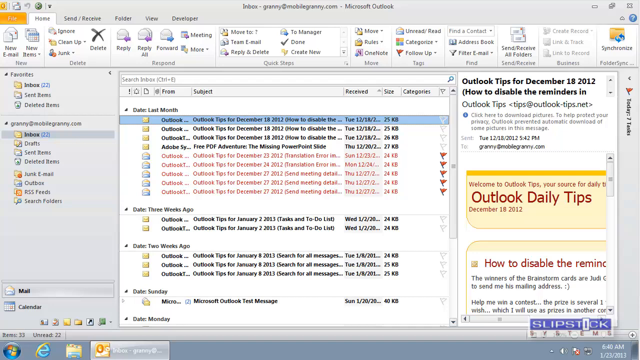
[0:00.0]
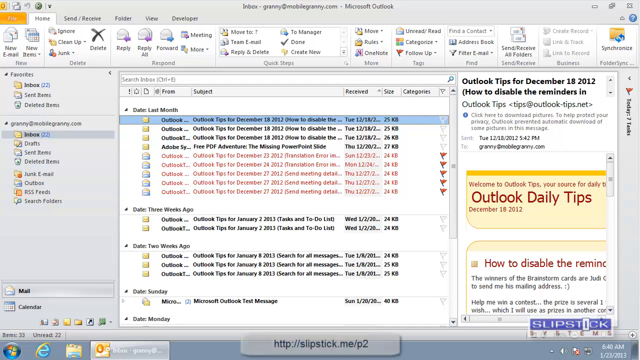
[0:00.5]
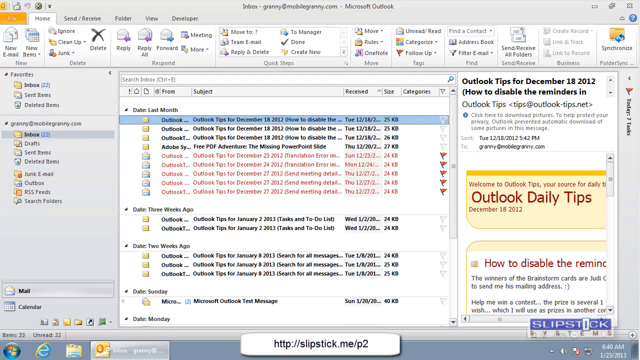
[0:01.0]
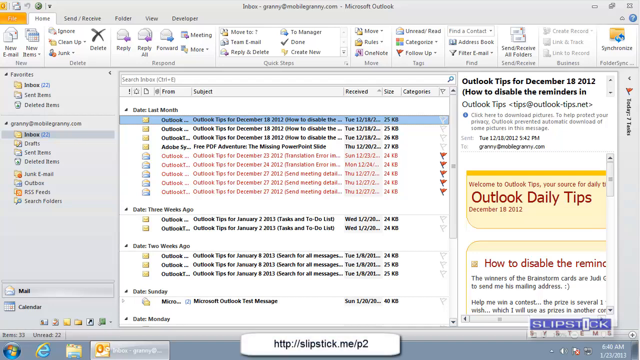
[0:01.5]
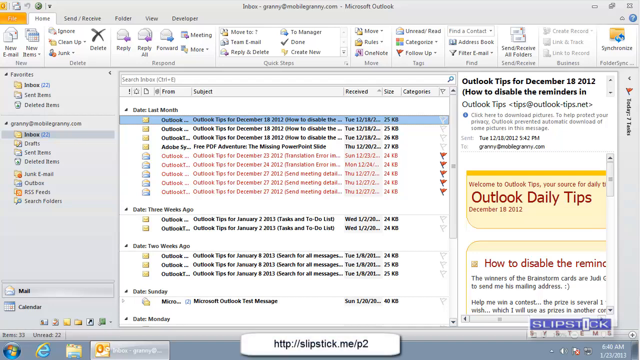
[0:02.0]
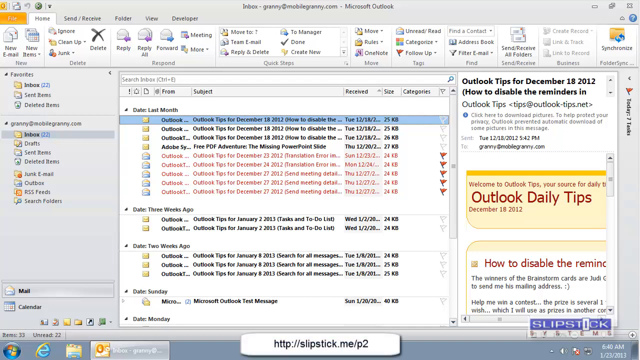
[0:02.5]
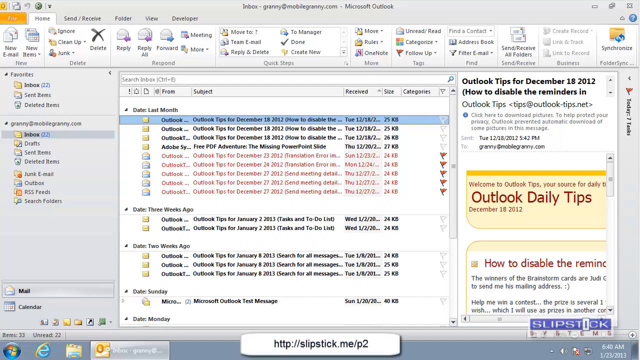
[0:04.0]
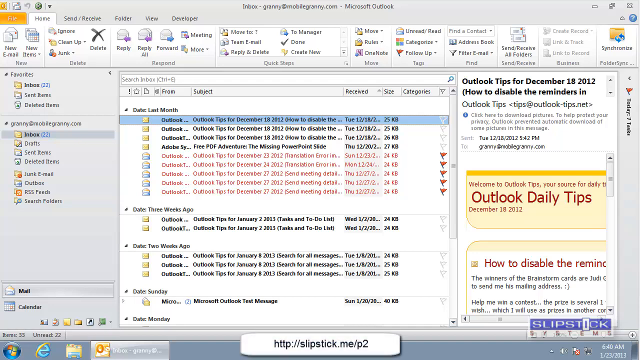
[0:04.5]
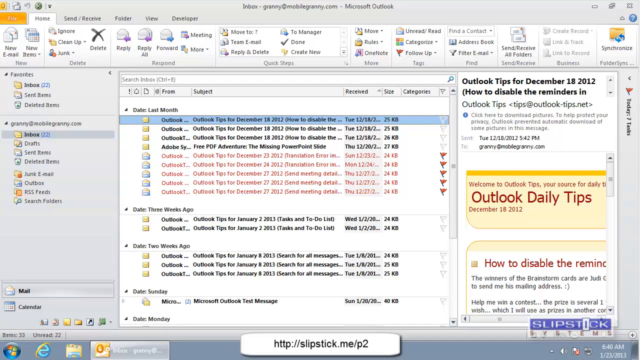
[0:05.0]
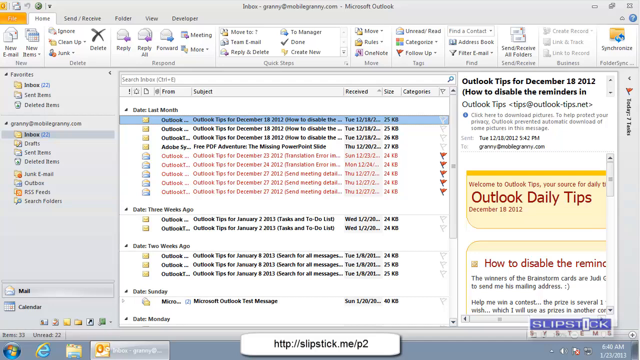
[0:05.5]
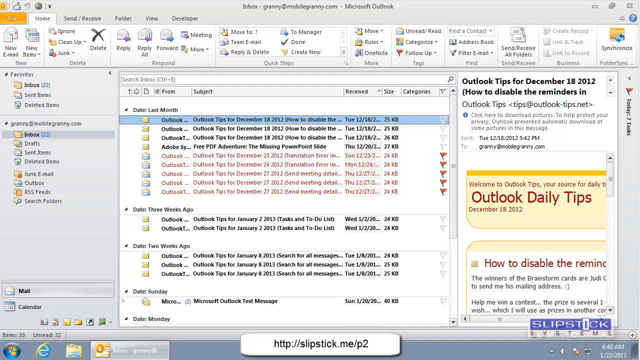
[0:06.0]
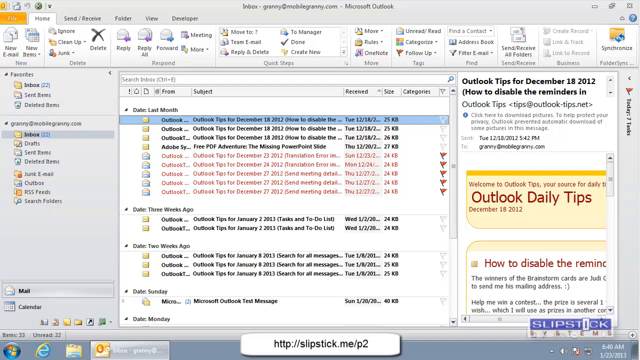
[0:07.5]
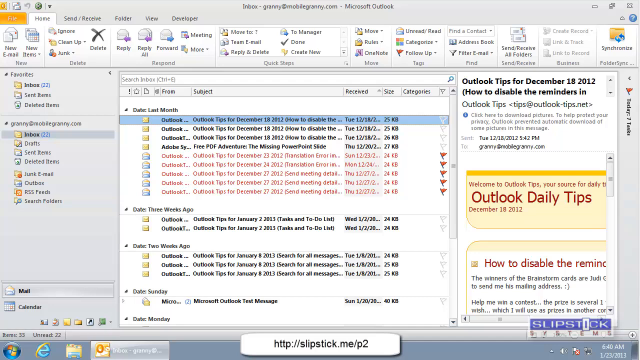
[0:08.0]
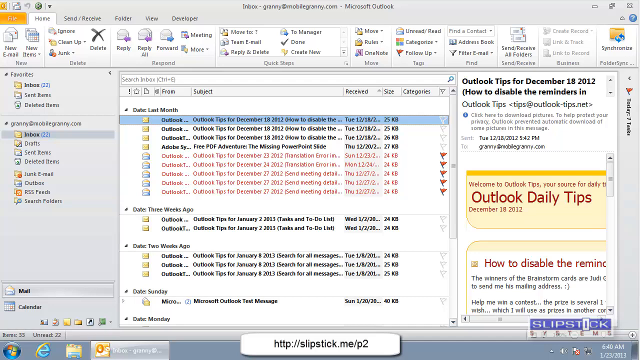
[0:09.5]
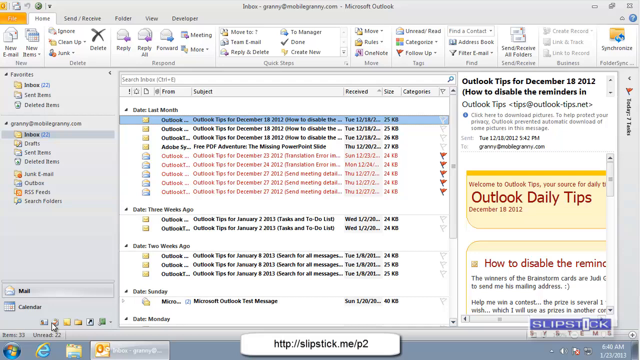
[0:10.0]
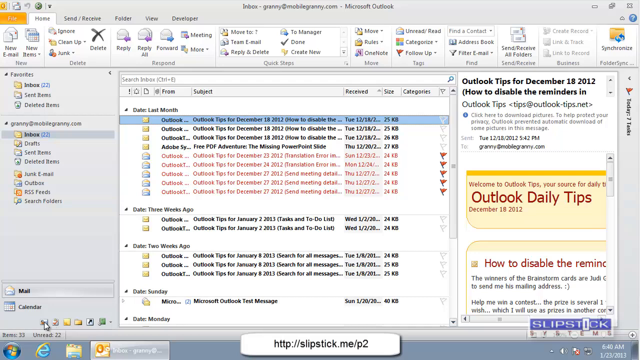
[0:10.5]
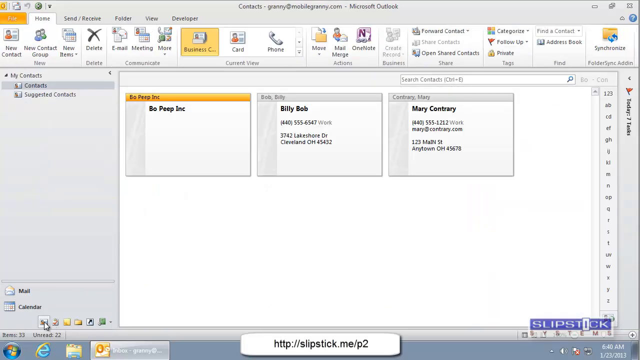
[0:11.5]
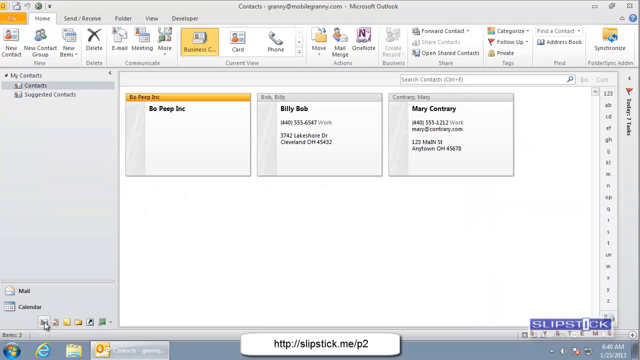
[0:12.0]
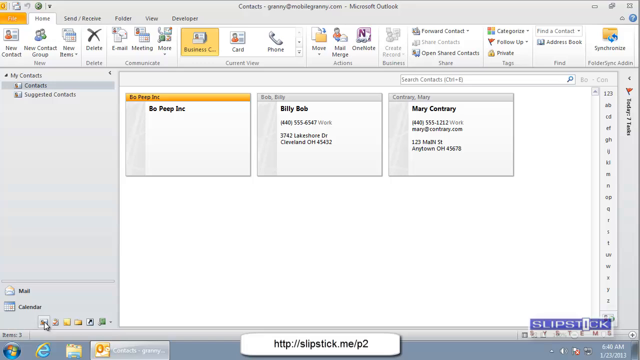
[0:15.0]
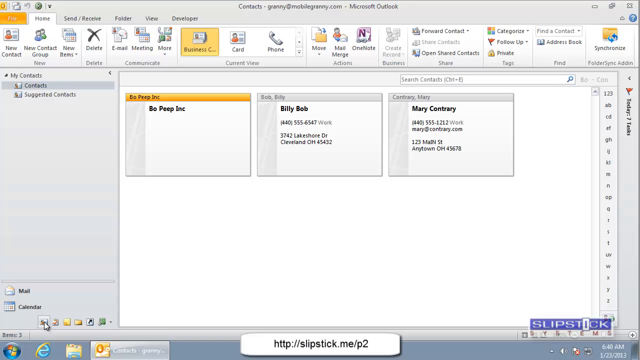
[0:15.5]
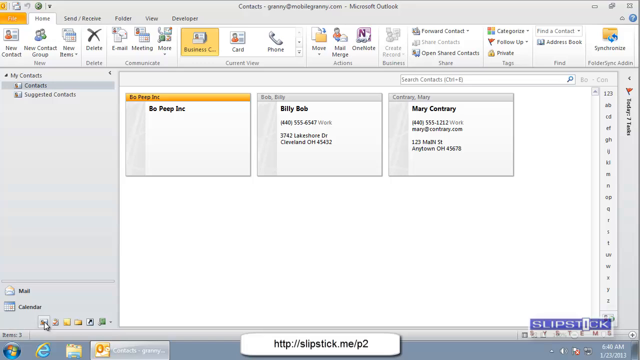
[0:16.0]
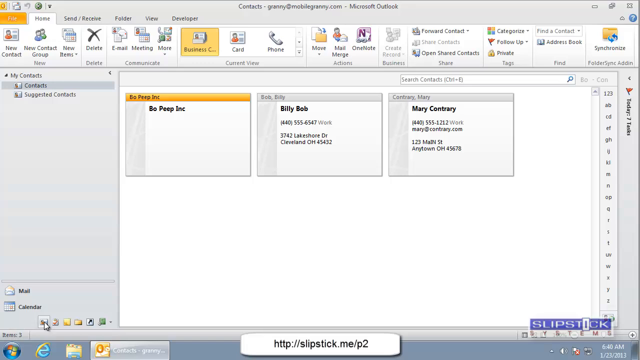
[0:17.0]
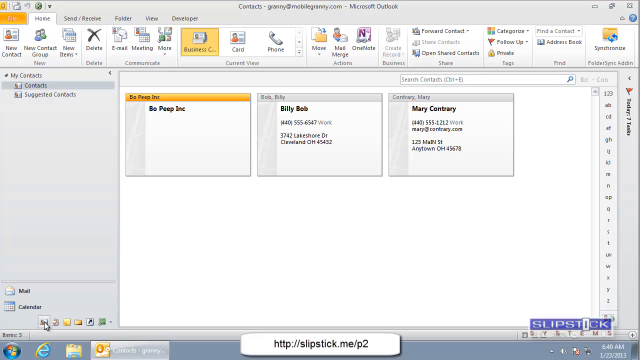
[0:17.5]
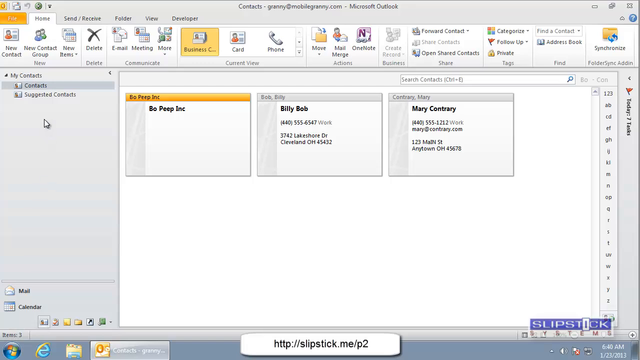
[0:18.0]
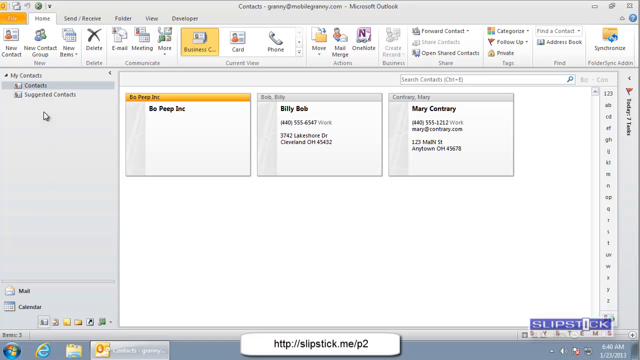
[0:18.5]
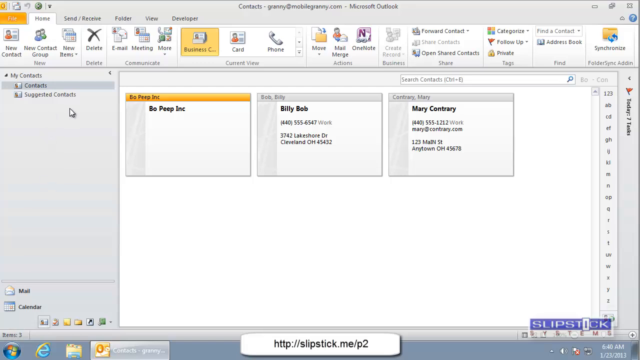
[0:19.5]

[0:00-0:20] What appears to be a person searches through different sections of Outlook on a computer. The typical Microsoft setup is visible, with various menus at the top, and the screen says "Outlook." Different Outlook options appear to be organized by month, by time and by date, and the user seems to be scrolling through some of them. On the right are some larger articles that say "Outlook Tips for December 2018, How to Disable the Reminders," and below that one says "Outlook Daily Tips for December 18, 2012." The user then apparently switches to a business section showing a couple of businesses, possibly mock businesses. There are three titles: "Bo Peep Inc.," "Billy Bob" and "Mary Contrary," suggesting this may be a tutorial using pretend businesses.